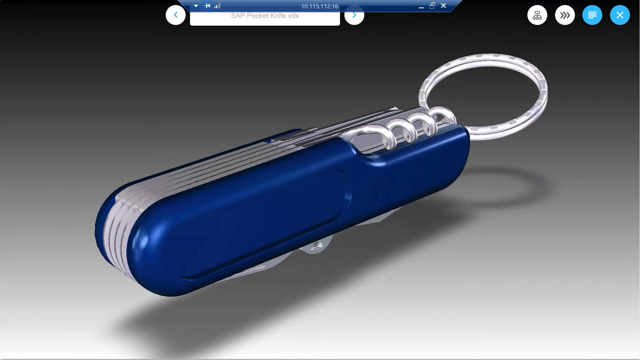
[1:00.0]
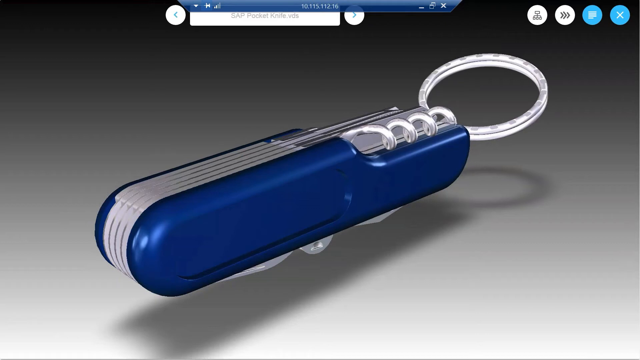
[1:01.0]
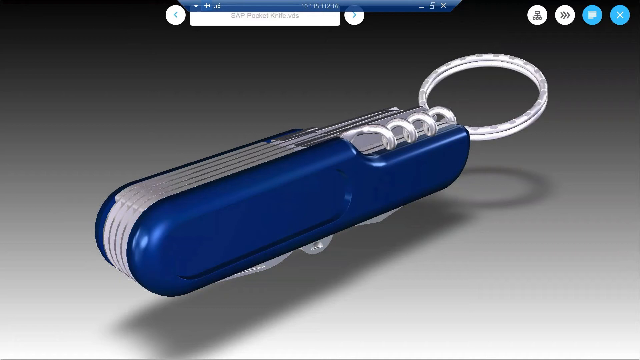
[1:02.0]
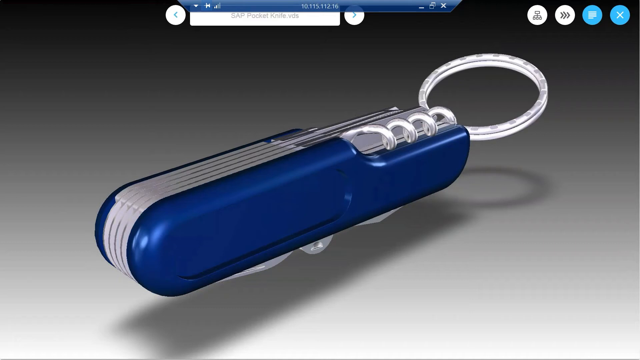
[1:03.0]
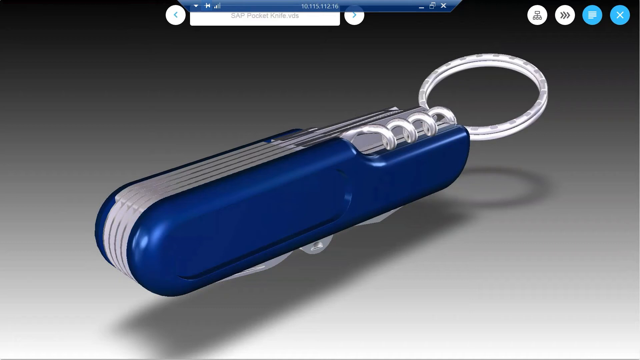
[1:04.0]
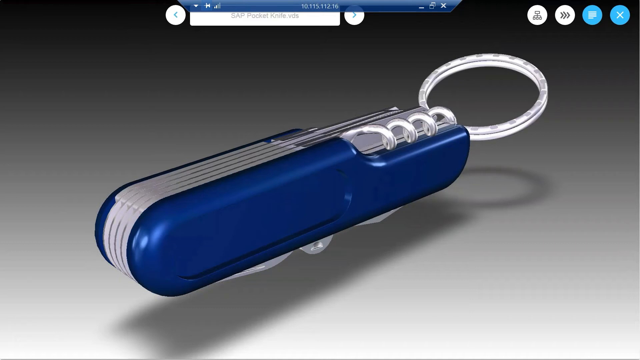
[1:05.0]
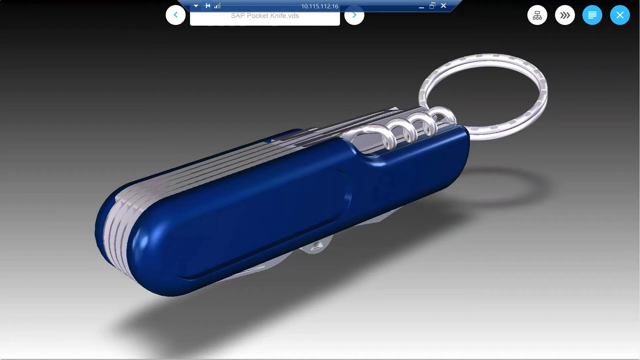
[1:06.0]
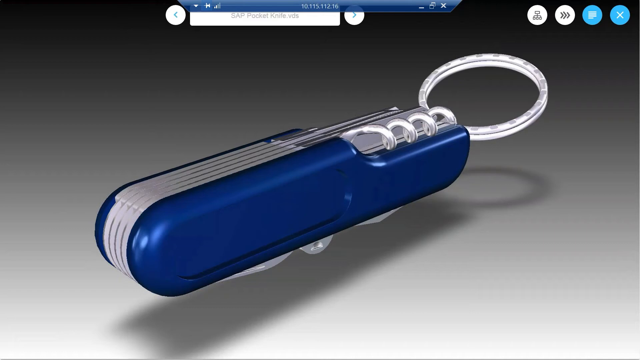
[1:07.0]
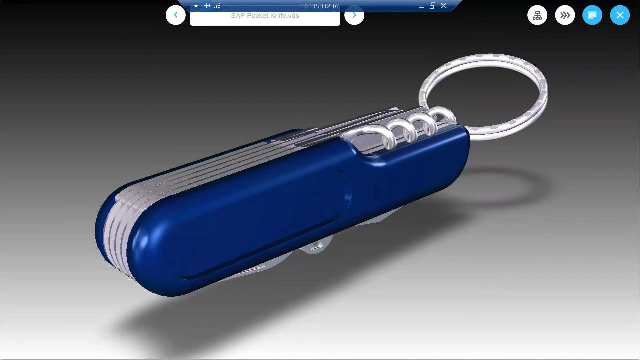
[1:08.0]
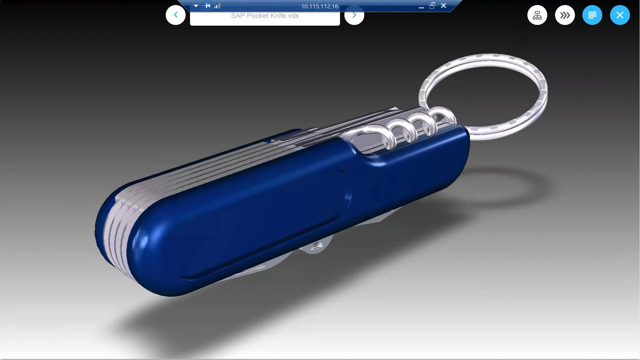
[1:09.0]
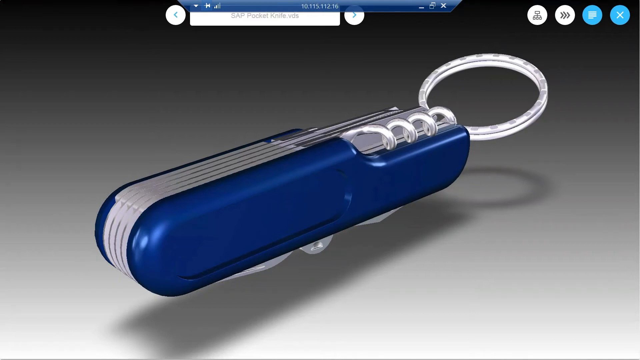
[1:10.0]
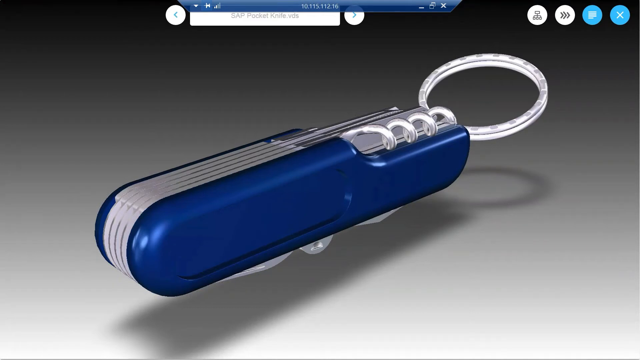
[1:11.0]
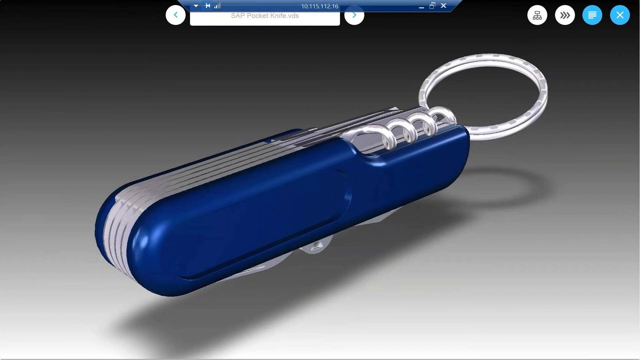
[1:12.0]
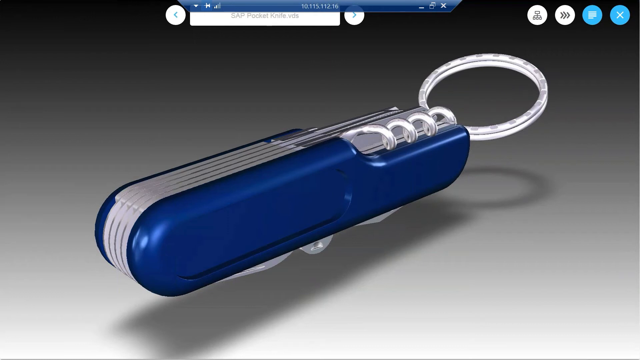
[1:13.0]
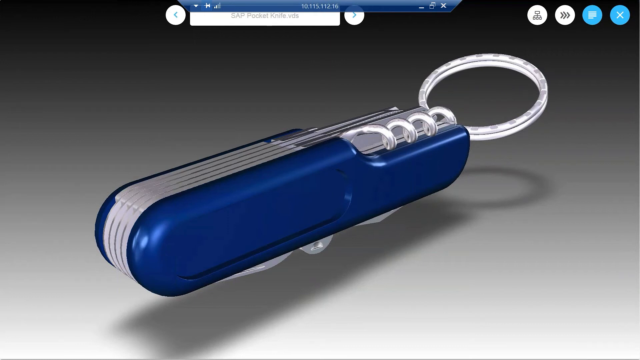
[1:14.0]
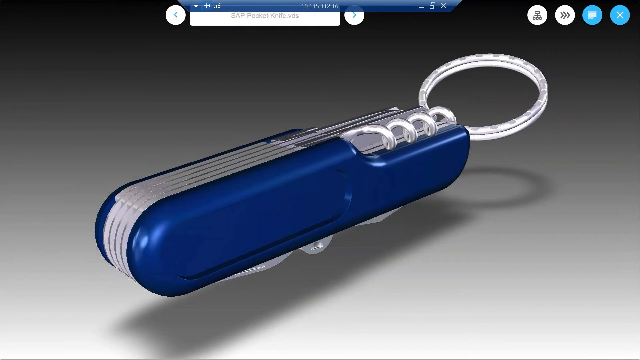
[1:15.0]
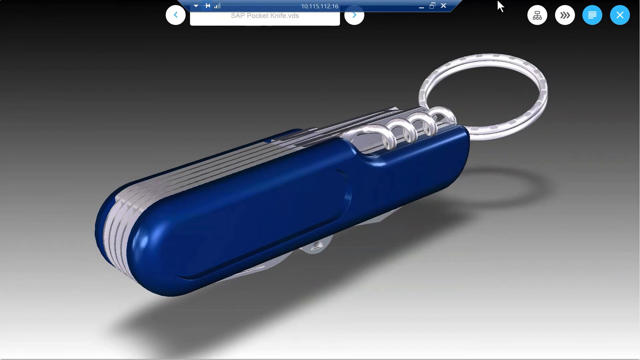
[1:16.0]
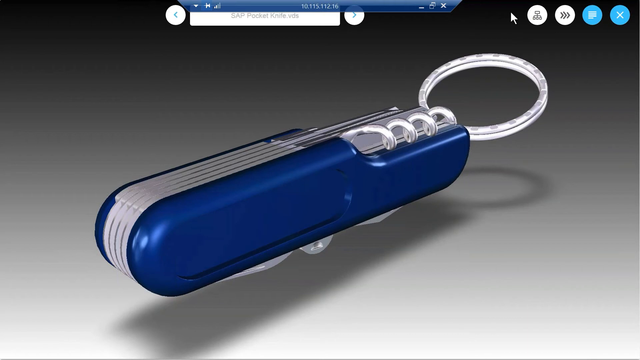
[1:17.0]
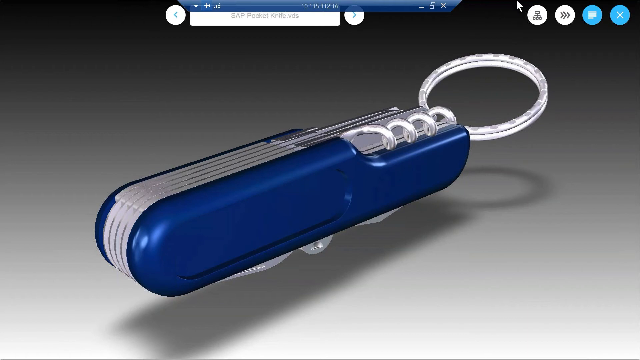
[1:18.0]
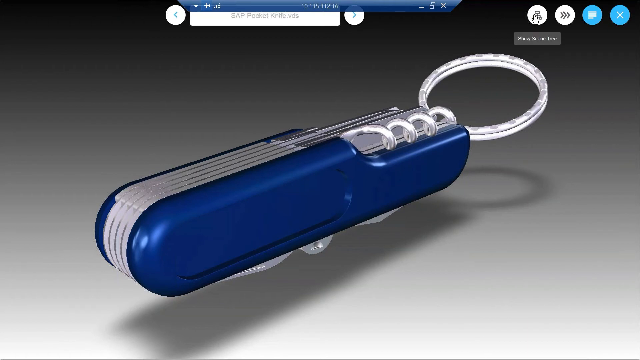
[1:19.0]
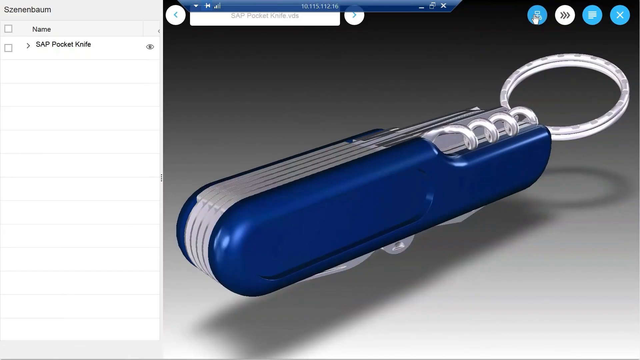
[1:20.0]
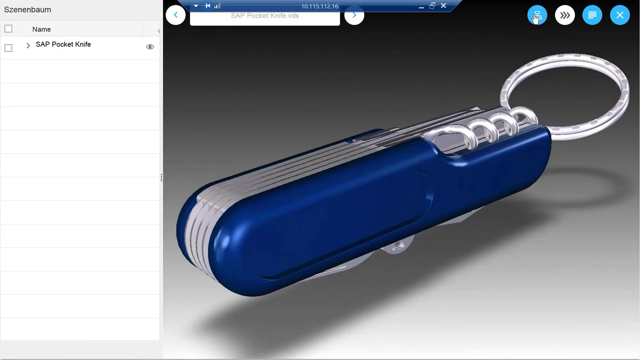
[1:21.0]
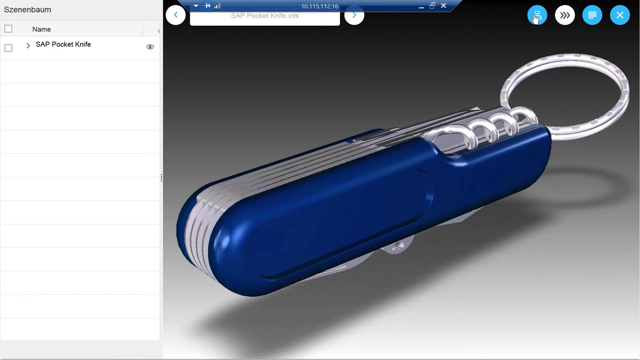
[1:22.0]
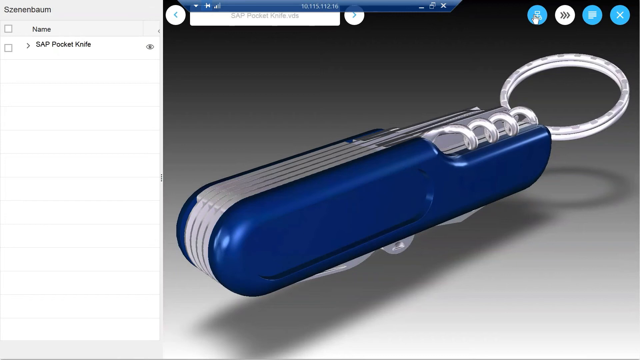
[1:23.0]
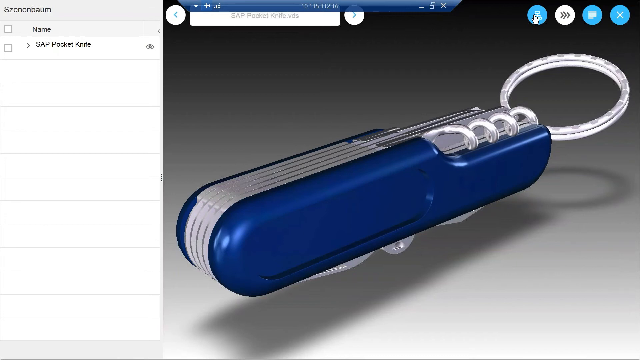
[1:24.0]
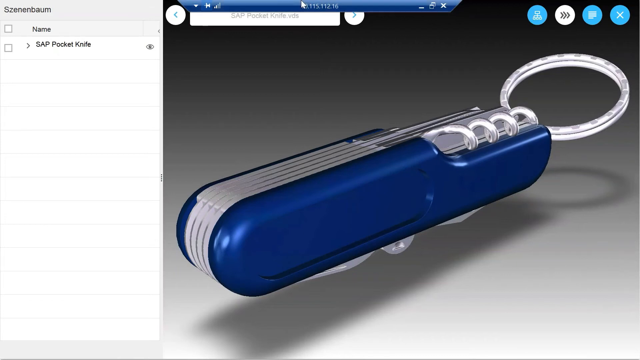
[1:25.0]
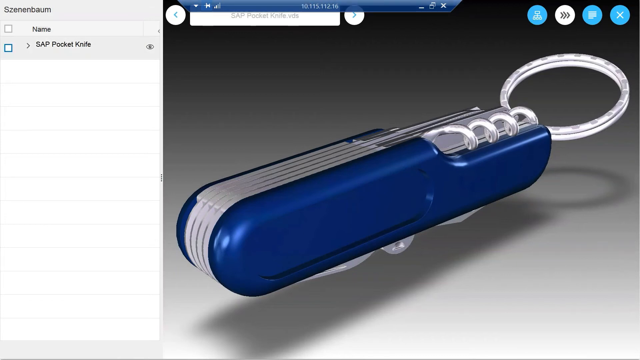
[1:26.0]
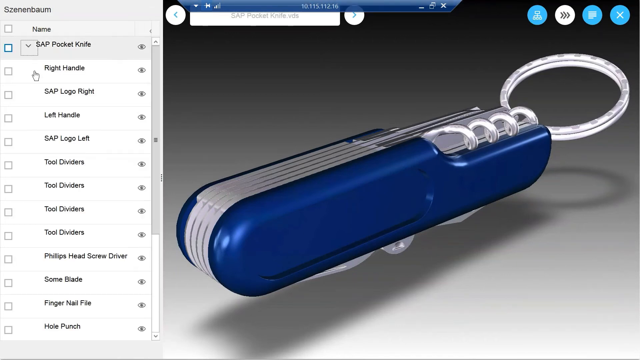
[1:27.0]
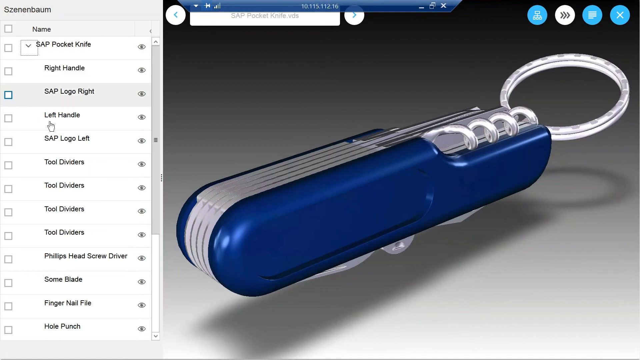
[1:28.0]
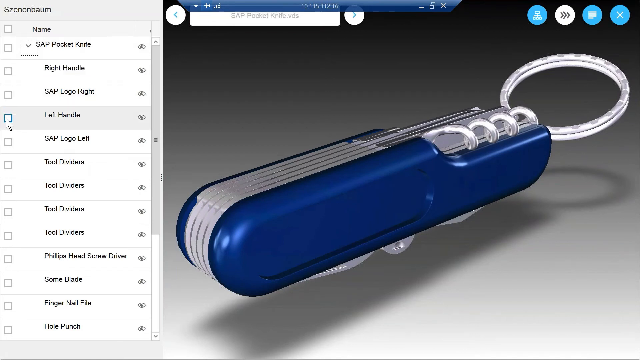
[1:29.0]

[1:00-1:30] A static image on the screen looks like a 3D-rendered computer object of a pen knife. A text label for the file at the top reads "sap pocket knife.vds". The pocket knife is blue, with a corkscrew and various knives, in a closed-up position, and a keyring is attached to it. The user's cursor appears and selects a button in the top right-hand corner, which opens a panel on the left-hand side. The panel's title is in a foreign language. It loads a checklist called "name" with only one item, "SAP pocket knife". The user selects this item, which expands the pocket knife label to show multiple labels underneath, each with check-mark boxes and a small eye icon.